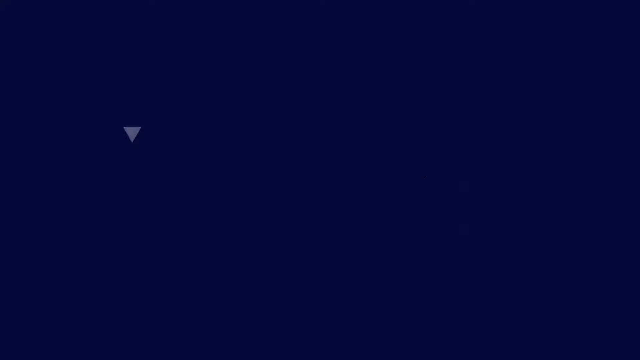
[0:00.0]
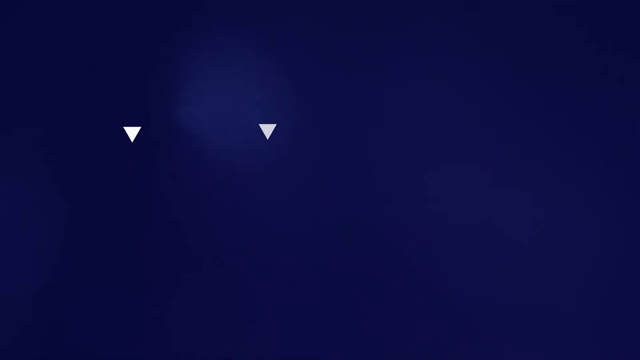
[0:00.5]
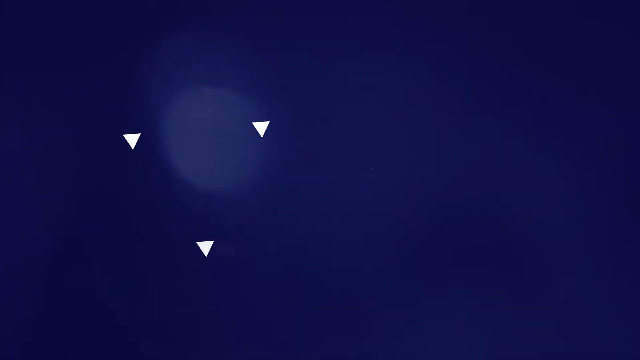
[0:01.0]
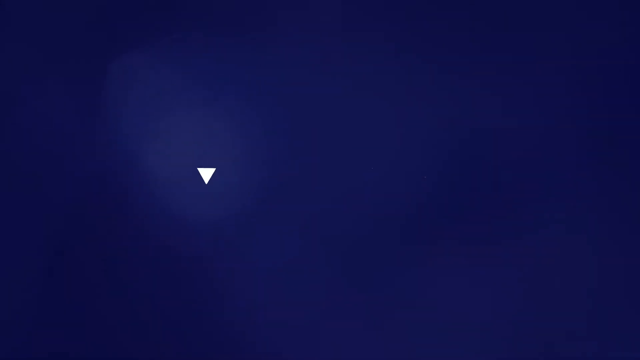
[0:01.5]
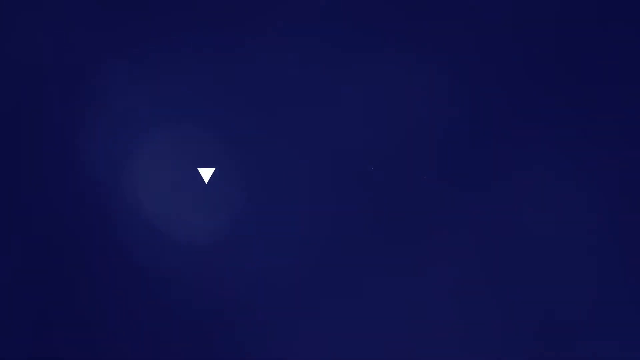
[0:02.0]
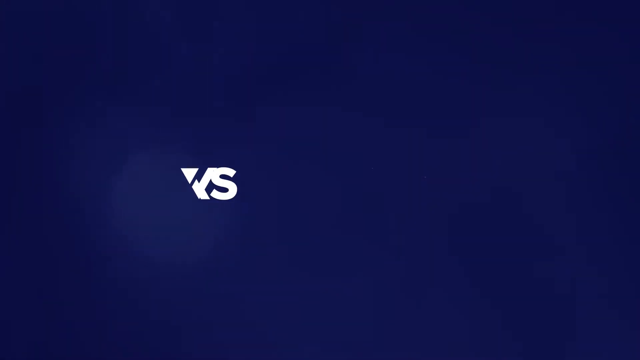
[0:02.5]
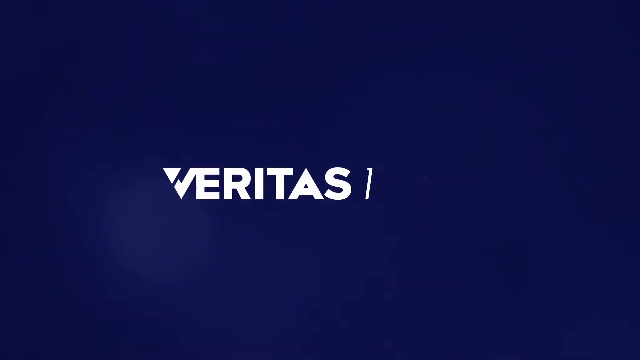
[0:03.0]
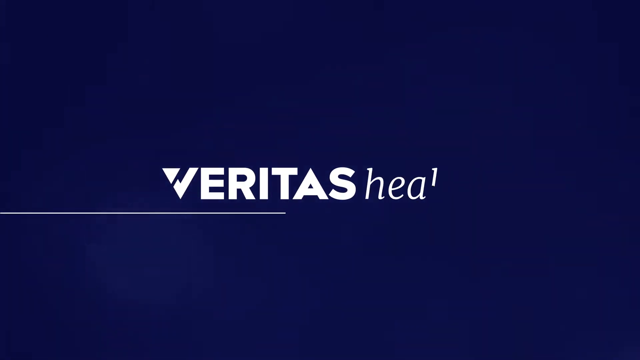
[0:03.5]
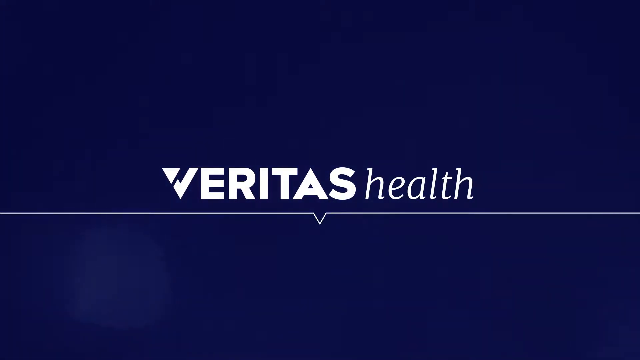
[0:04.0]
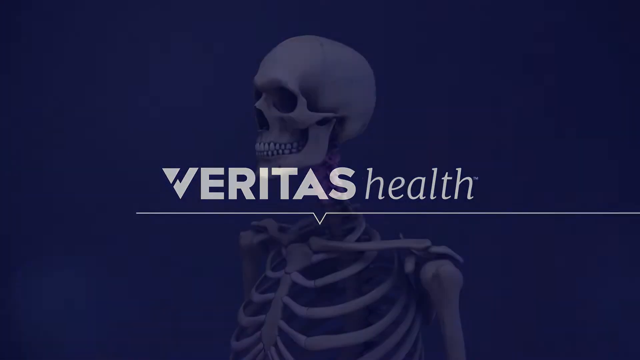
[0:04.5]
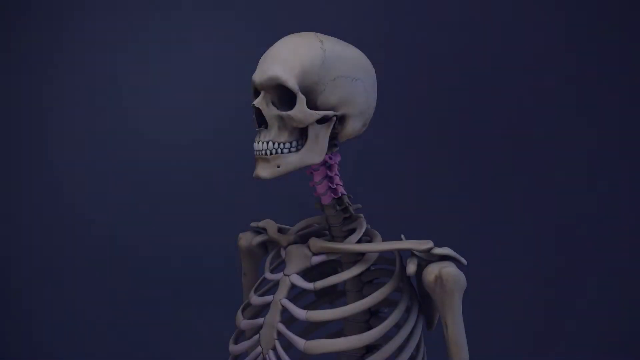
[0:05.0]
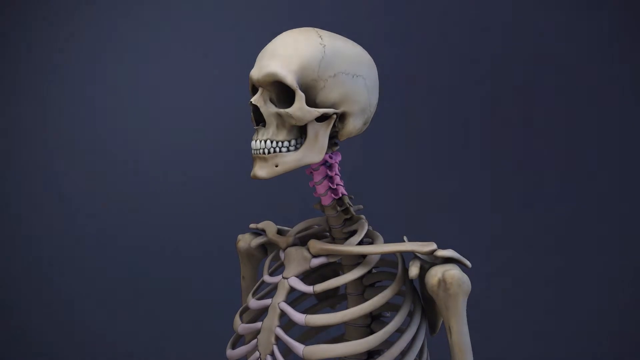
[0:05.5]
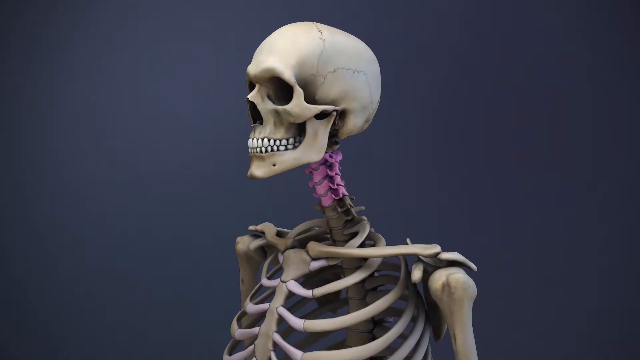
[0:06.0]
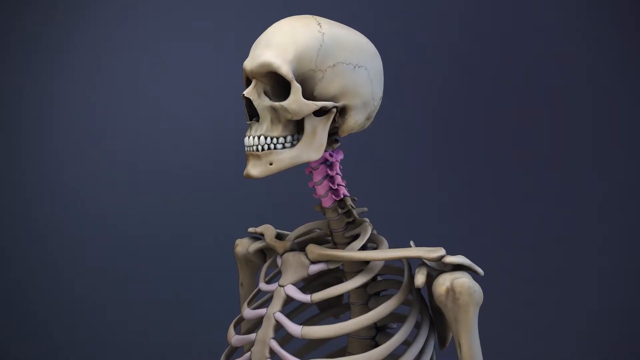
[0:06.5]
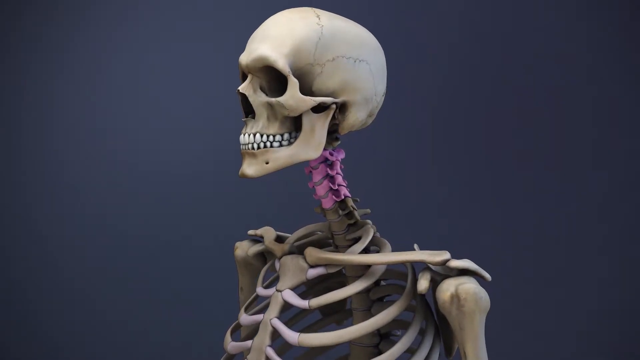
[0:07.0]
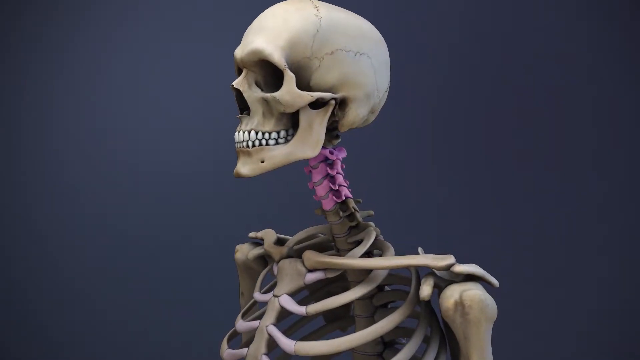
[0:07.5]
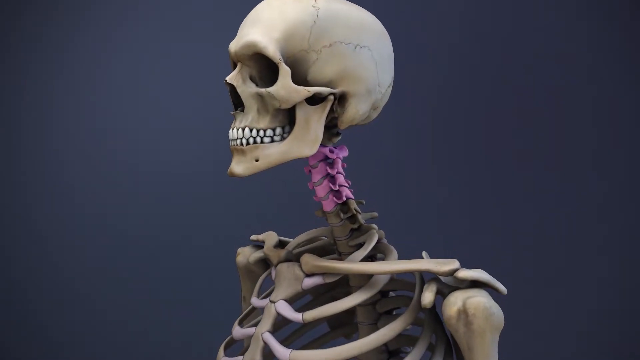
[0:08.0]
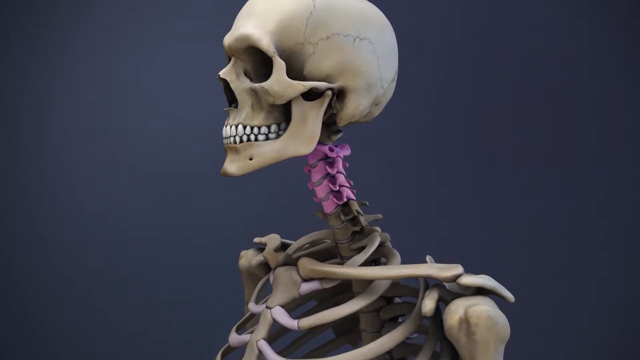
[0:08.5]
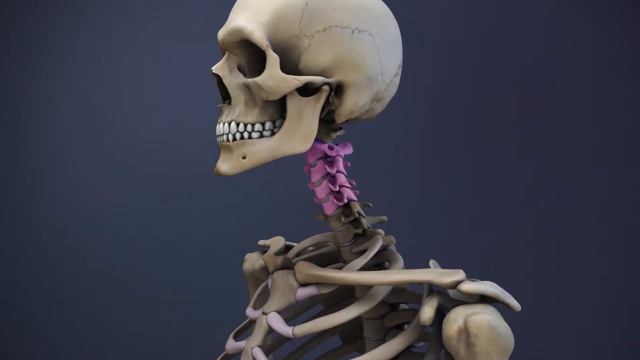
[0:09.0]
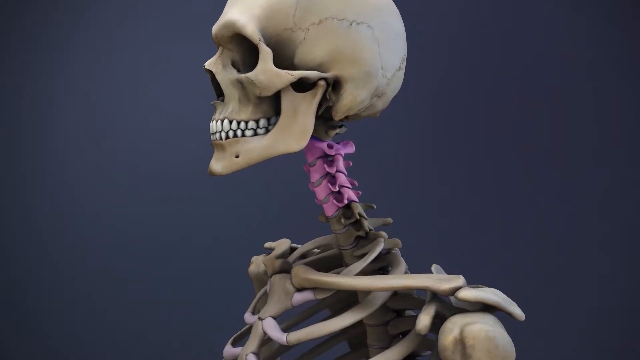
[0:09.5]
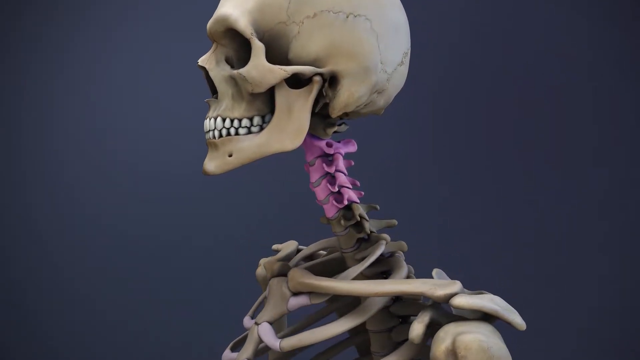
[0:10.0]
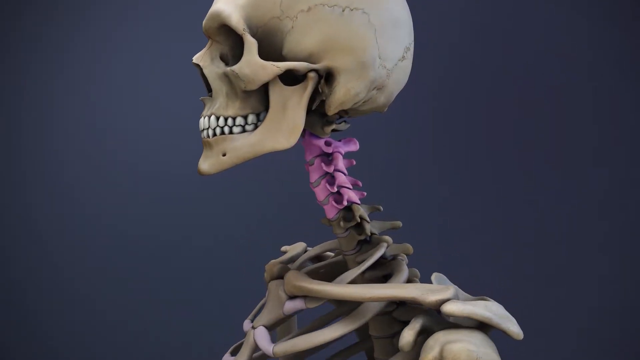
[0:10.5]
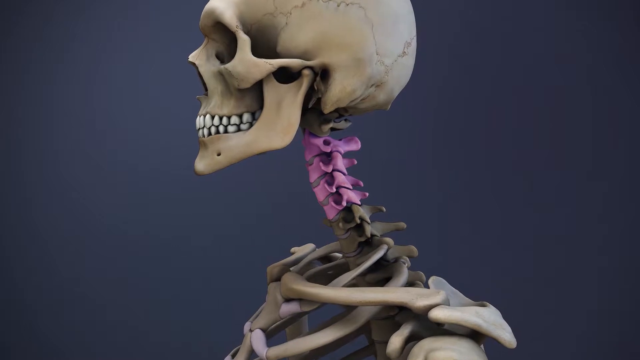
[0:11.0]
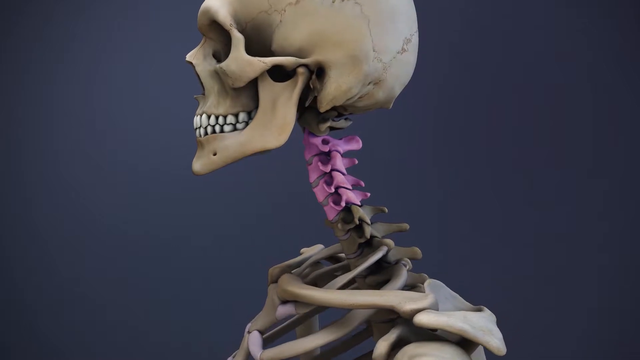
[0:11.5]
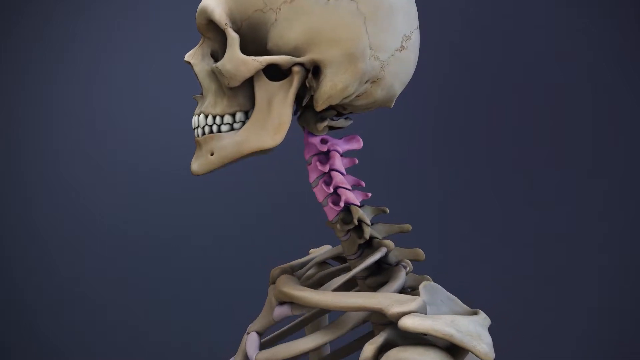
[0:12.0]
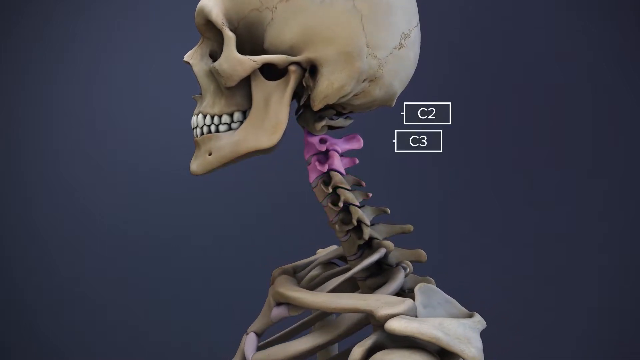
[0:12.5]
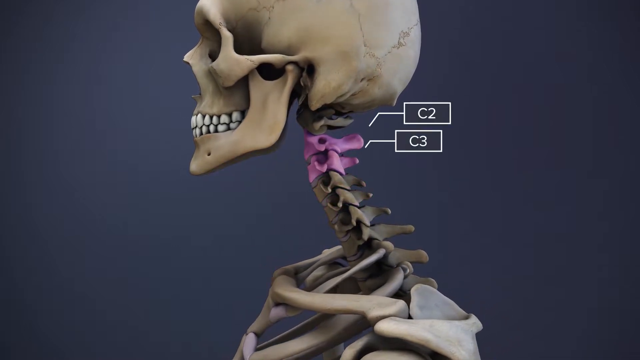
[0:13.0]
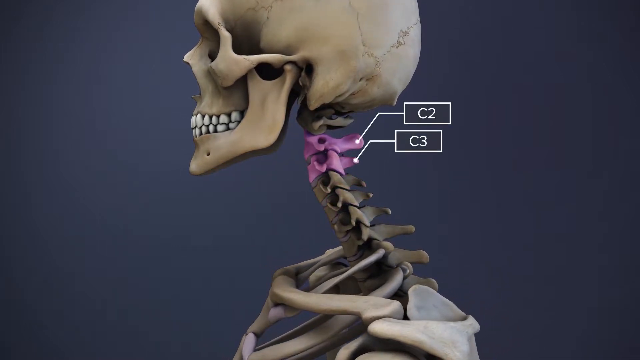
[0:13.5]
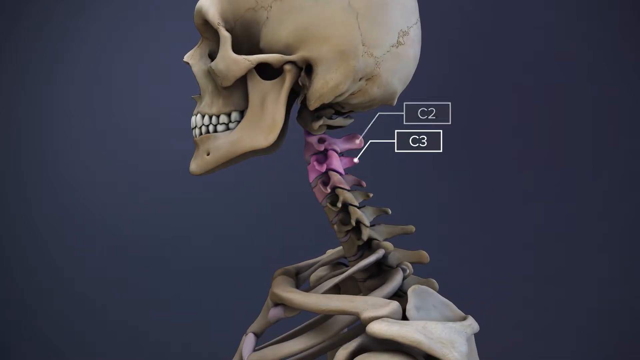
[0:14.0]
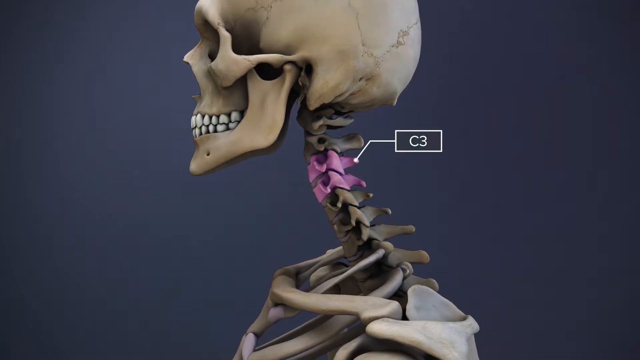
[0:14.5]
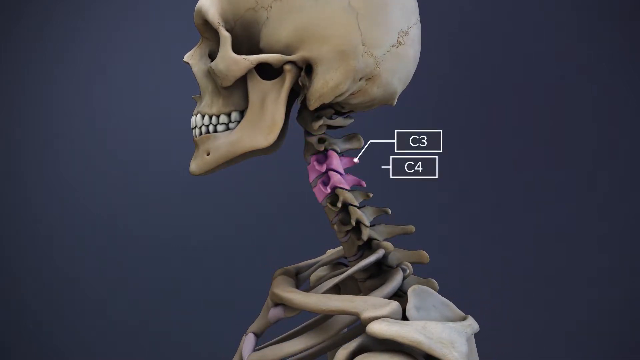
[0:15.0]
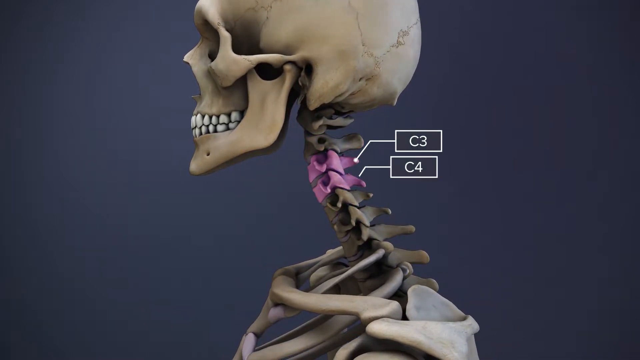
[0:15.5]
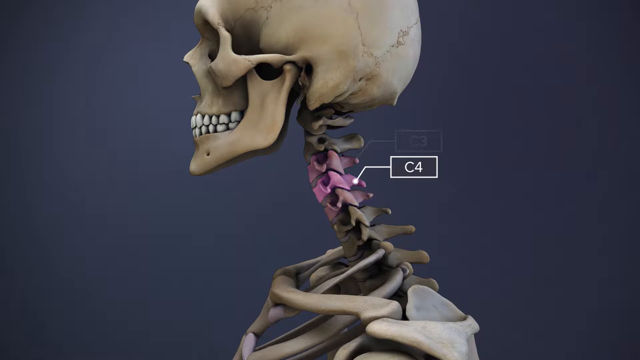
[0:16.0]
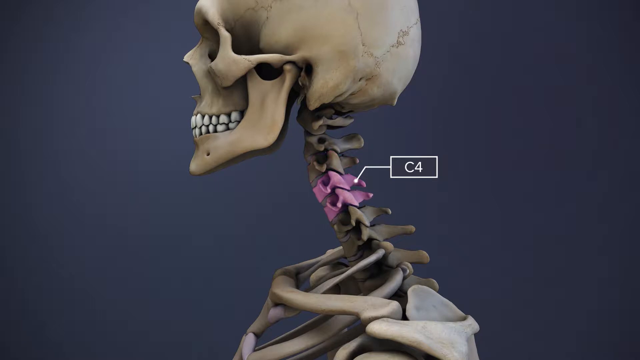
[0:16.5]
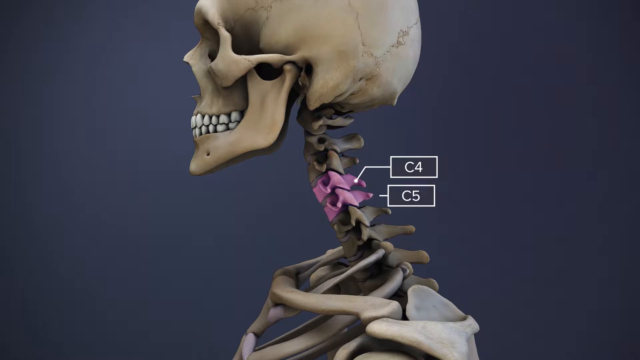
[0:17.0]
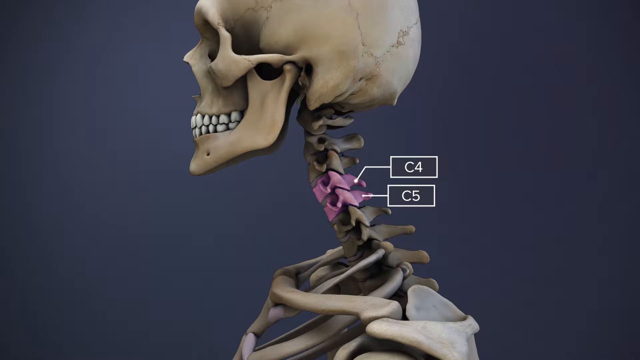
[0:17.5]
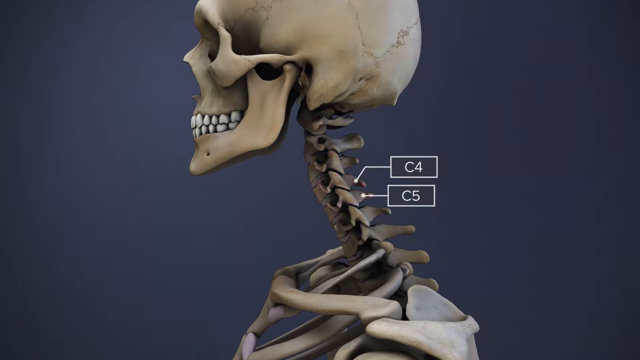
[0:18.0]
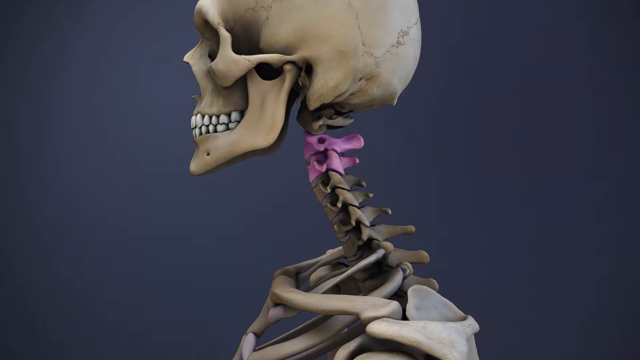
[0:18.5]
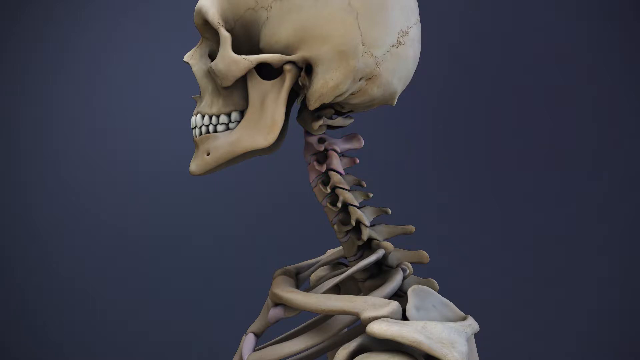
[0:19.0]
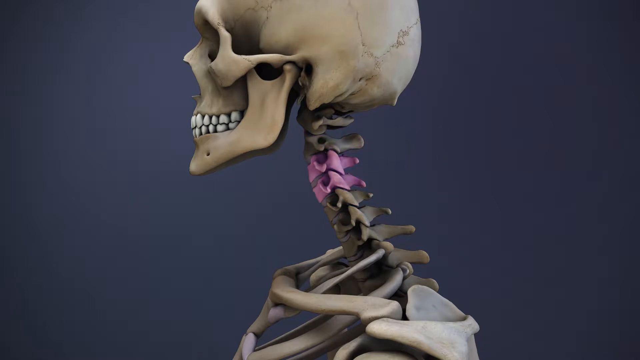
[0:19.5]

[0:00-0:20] White triangles form against a blue background and join together into one triangle. A company logo called Veritas health appears and then disappears. The background becomes gray, and a 3D rendered image of the upper body of a human skeleton appears. The skull faces left, so the skeleton is seen from its left side. The view zooms in closer, focusing on the neck area, which is light purple. The camera keeps moving in, showing the full left side view of the skeleton, and continues to zoom in on the light purple neck. The labels C2 and C3 appear, pointing to vertebrae on the neck. C2 disappears and C3 and C4 are shown, pointing to where they are located on the neck. C3 then disappears and C5 appears beneath C4, pointing to its location. The top areas, then the middle areas, then the lower areas of the neck are highlighted in purple.